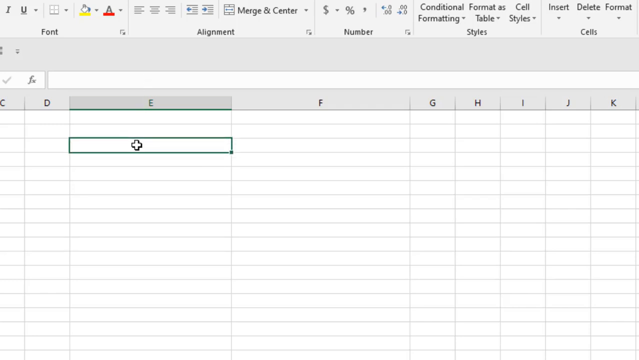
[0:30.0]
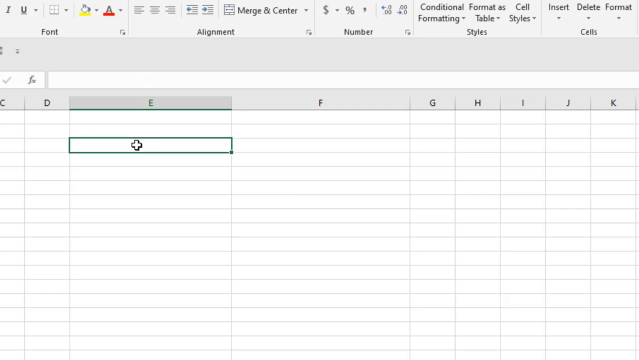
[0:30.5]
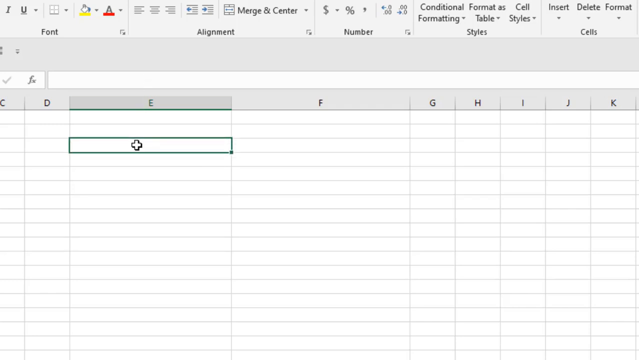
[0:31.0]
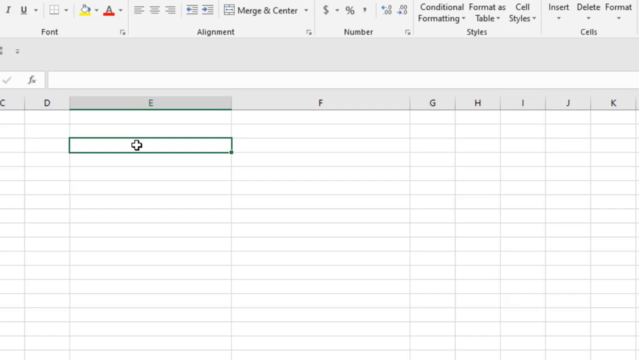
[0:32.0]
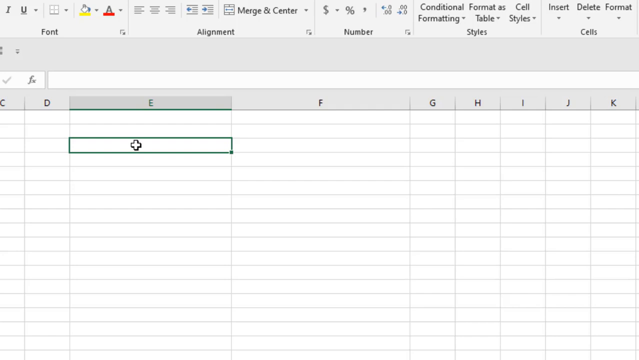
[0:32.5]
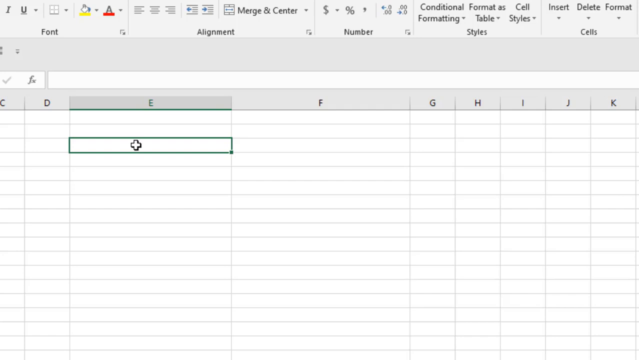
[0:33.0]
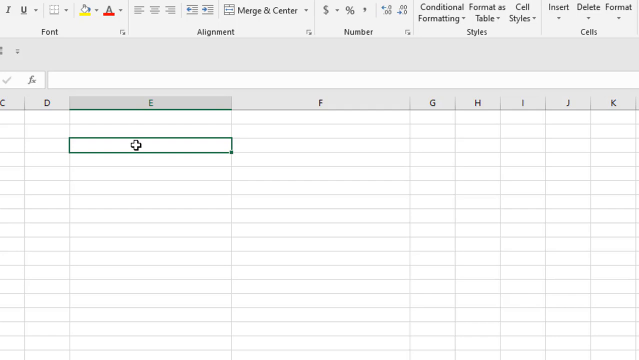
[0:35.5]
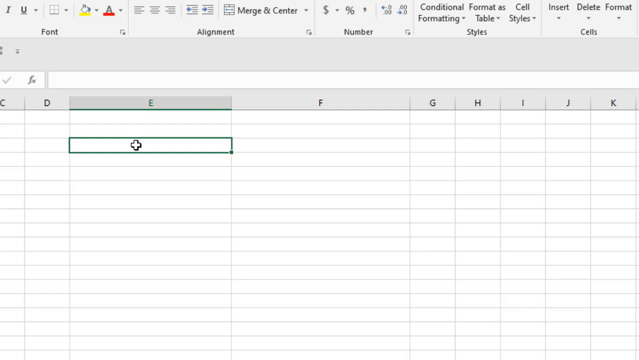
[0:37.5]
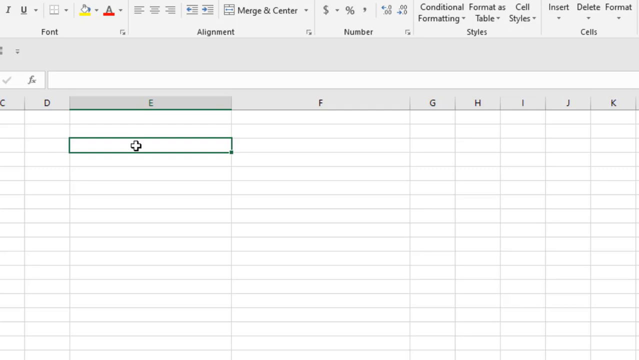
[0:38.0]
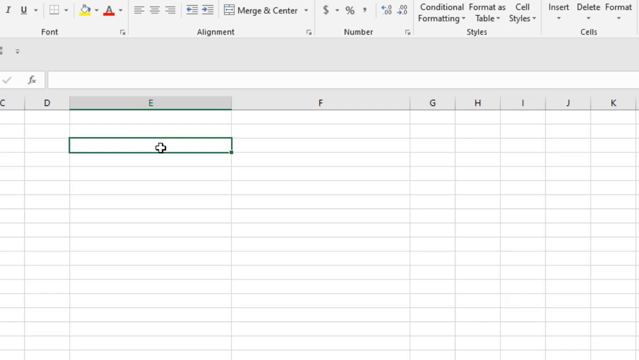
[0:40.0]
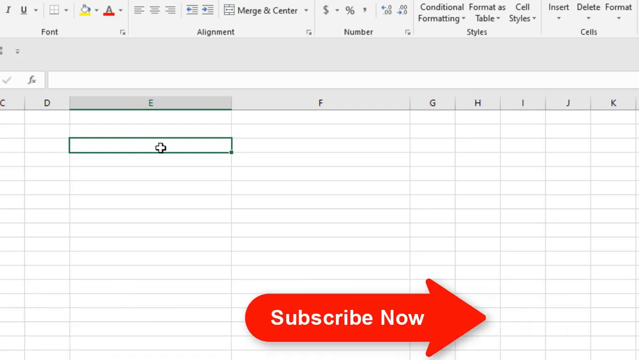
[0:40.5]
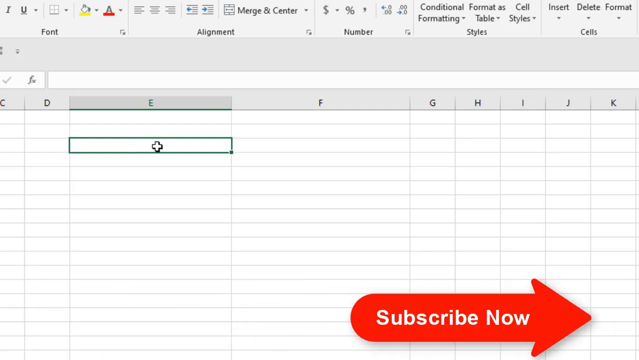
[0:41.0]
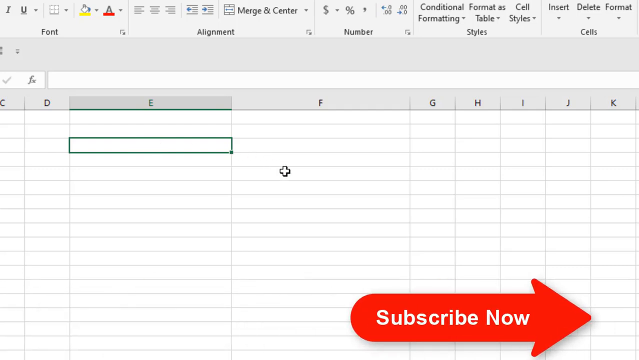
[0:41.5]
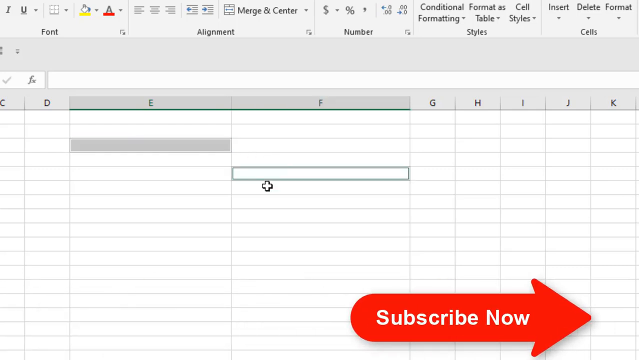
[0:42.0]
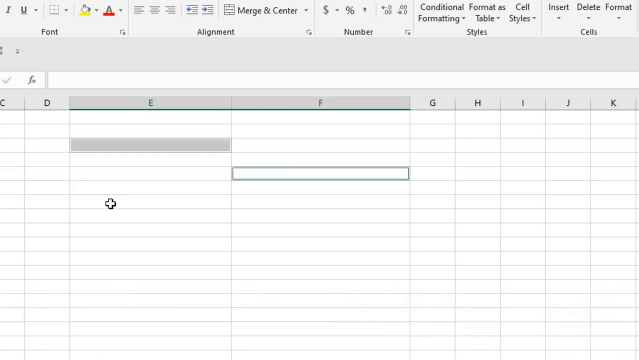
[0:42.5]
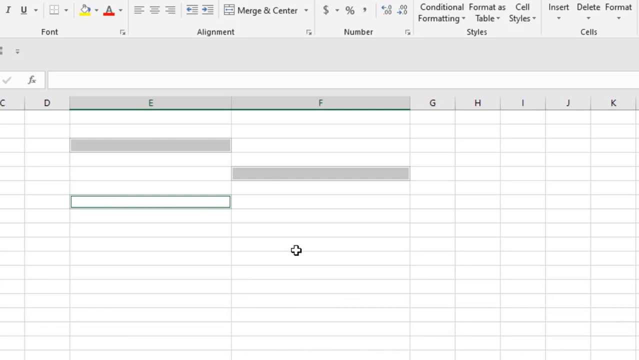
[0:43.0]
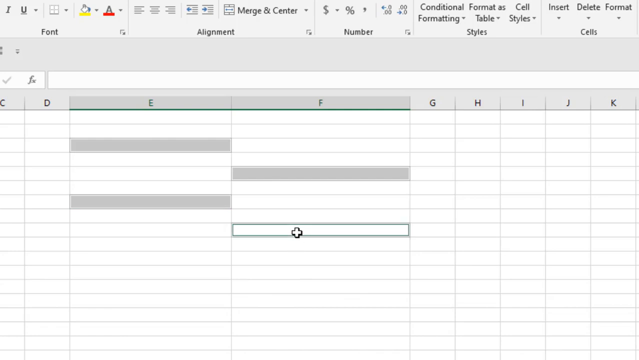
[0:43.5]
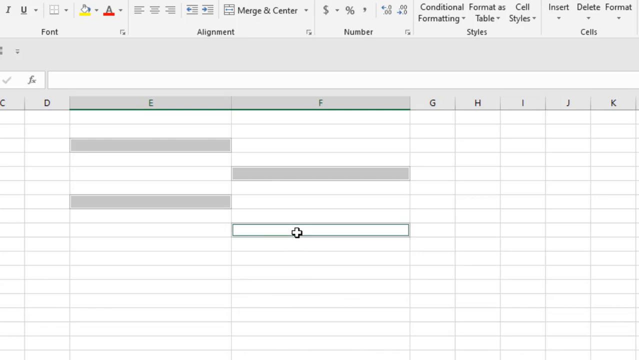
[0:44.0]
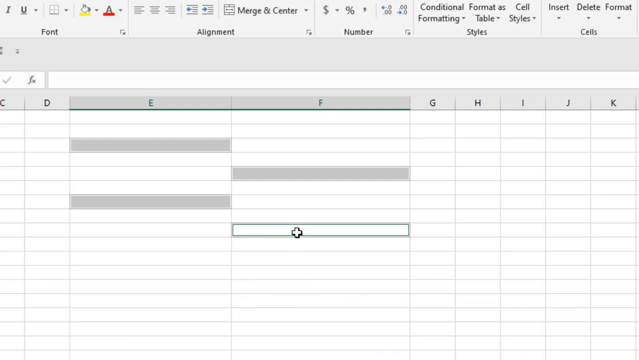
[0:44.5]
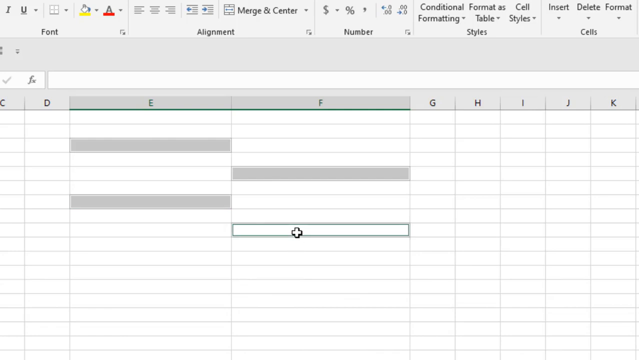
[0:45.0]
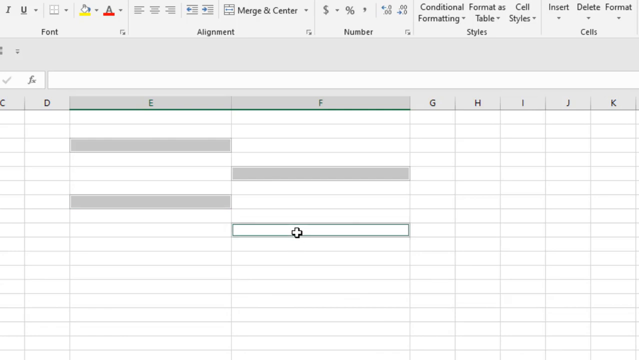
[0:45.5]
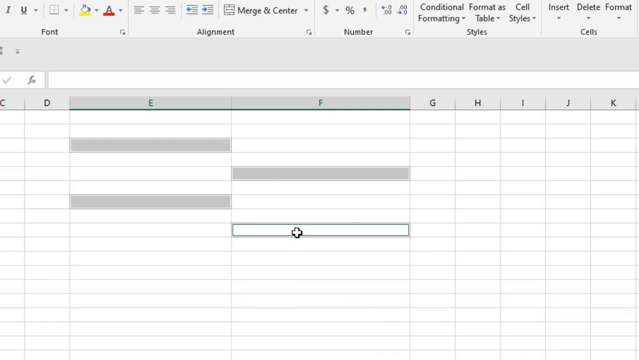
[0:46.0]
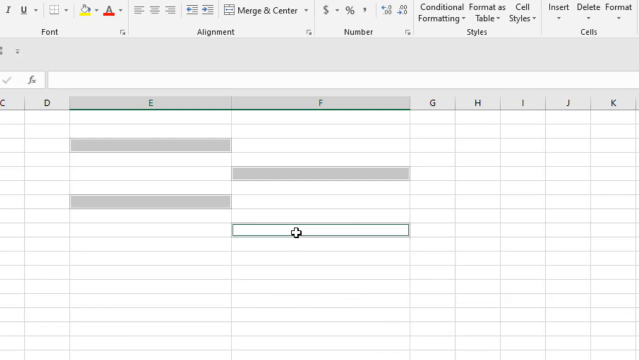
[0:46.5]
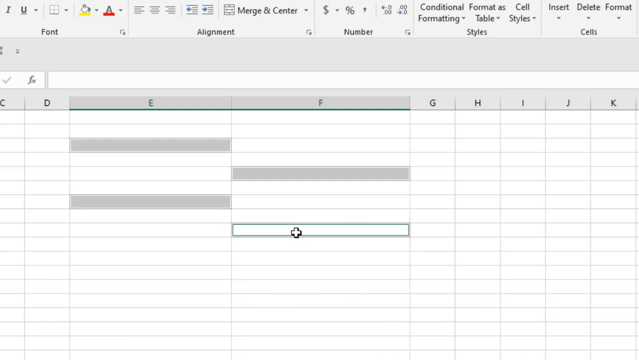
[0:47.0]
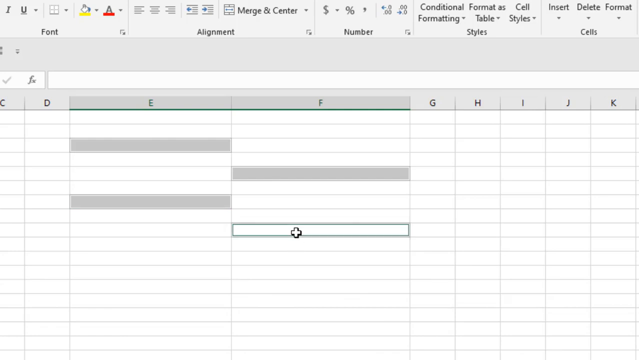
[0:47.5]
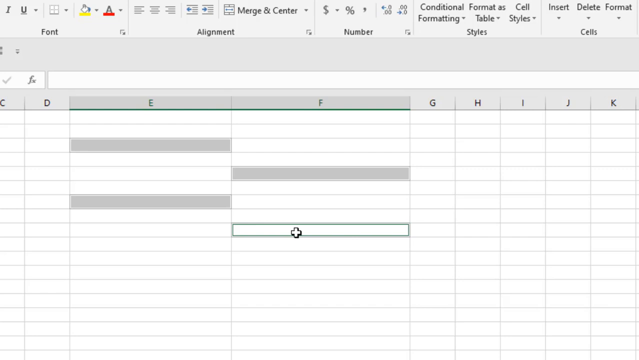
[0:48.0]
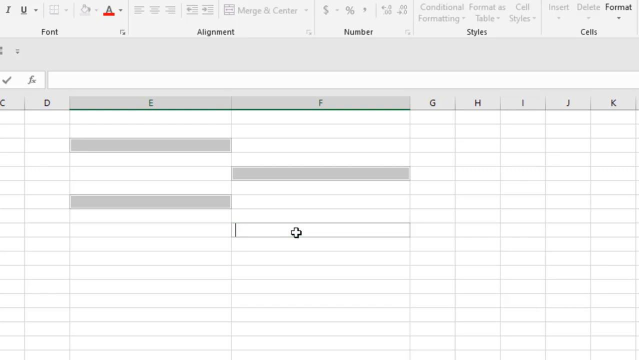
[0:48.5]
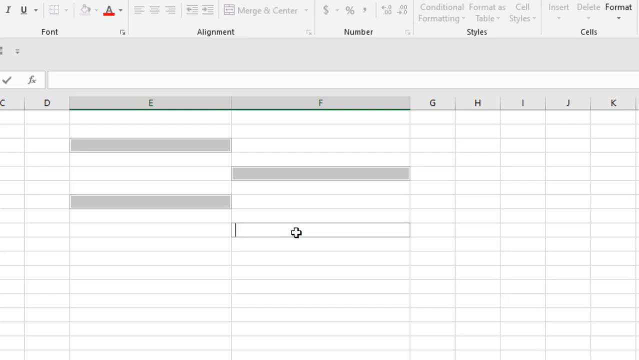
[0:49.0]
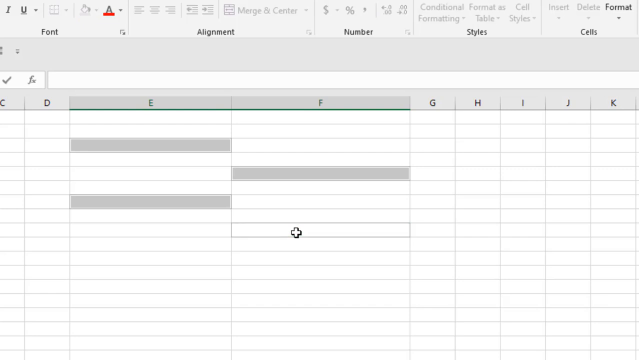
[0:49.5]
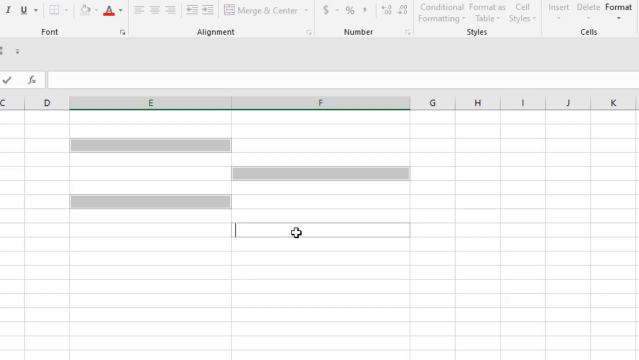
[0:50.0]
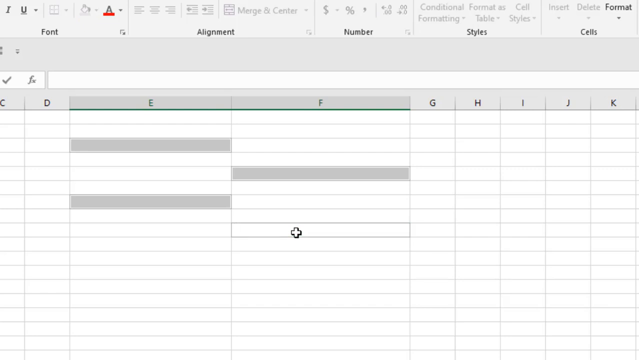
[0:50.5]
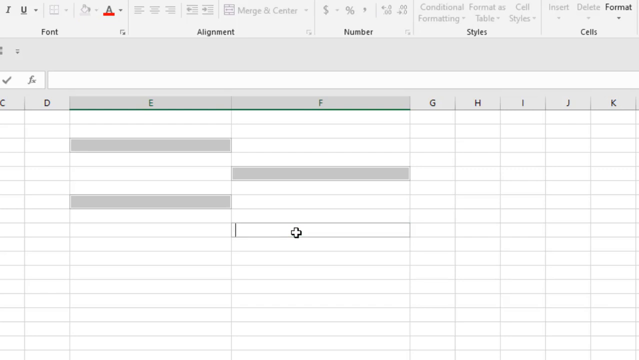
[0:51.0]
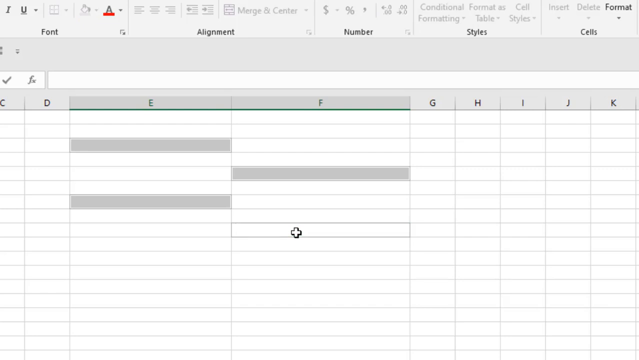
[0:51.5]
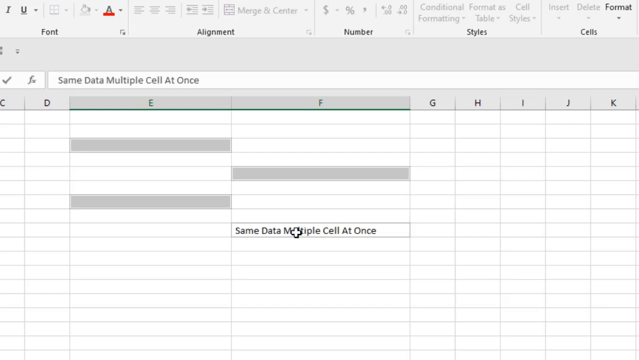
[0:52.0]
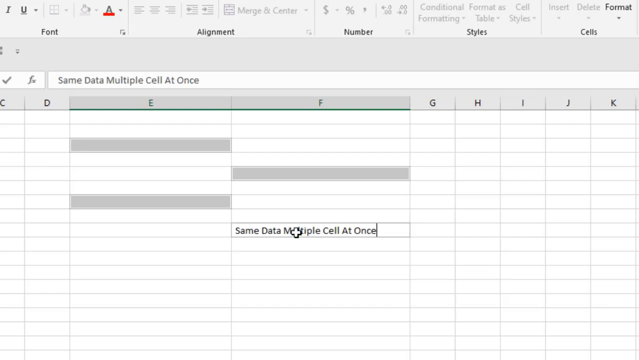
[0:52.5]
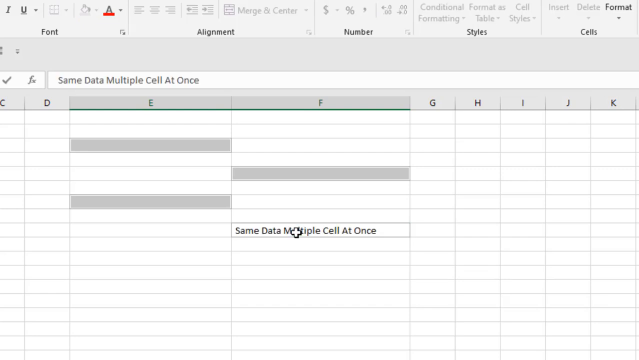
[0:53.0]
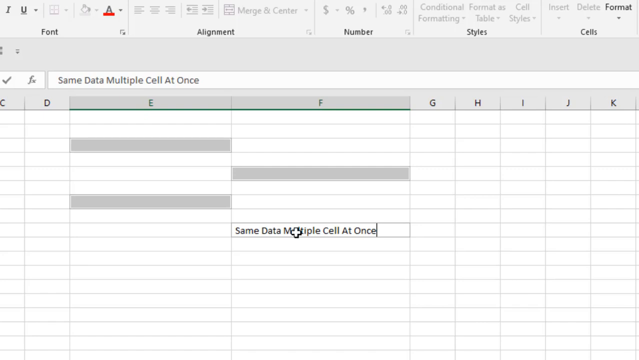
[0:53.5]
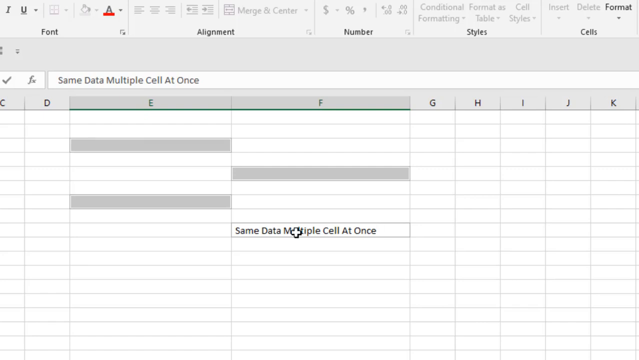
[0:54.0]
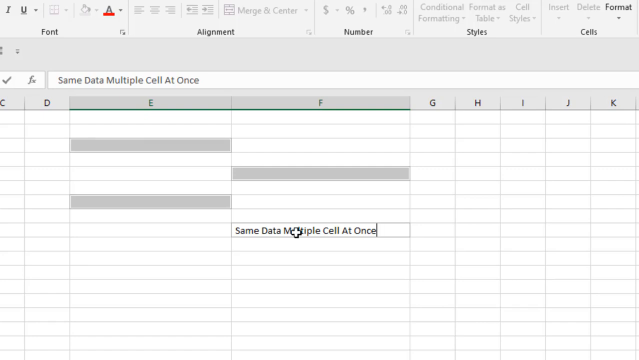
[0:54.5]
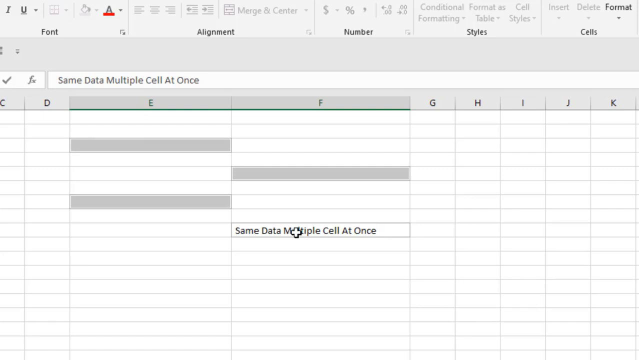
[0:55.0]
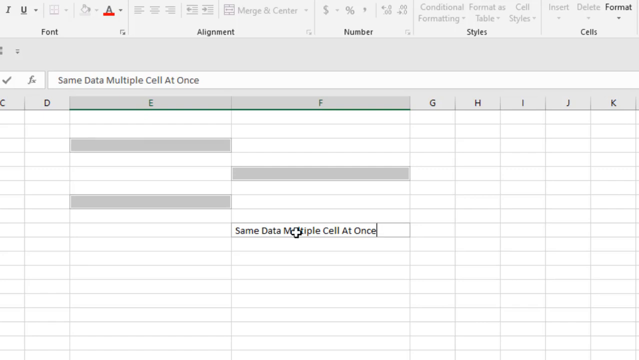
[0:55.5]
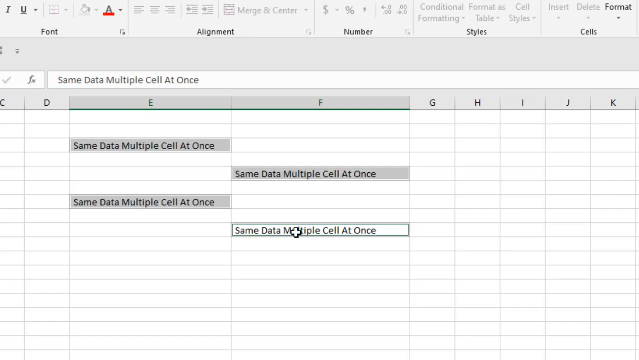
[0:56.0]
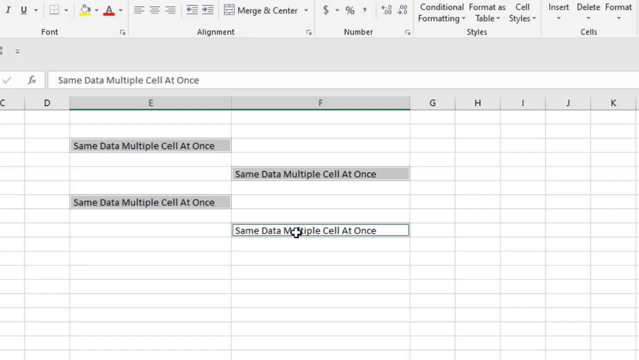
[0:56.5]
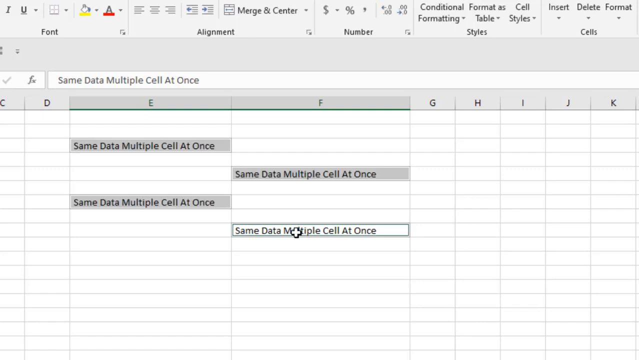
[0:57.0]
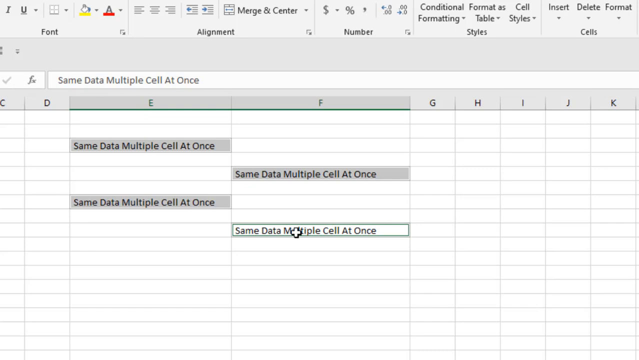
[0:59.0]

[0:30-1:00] The person highlights two cells in column E, skips one row, and marks two cells in column F. They then type into the second cell in column F first. An arrow passes across the screen with the word "subscribe", suggesting this is possibly a YouTube channel teaching how to use Excel. Font, alignment, numbers, styles, and cell options are visible at the top, and the typing into the cells is shown.